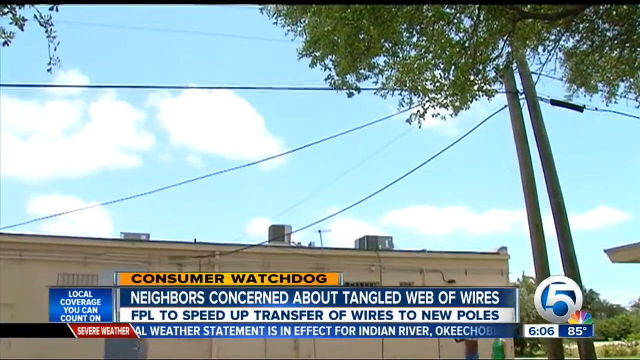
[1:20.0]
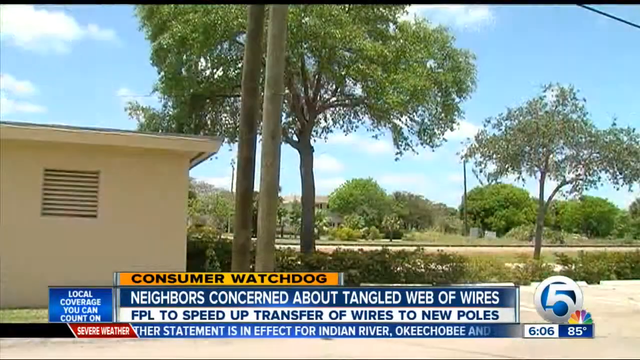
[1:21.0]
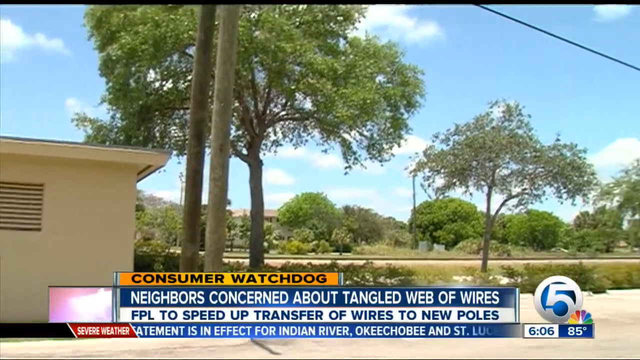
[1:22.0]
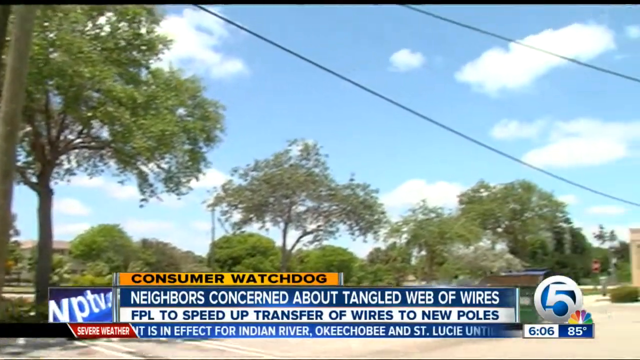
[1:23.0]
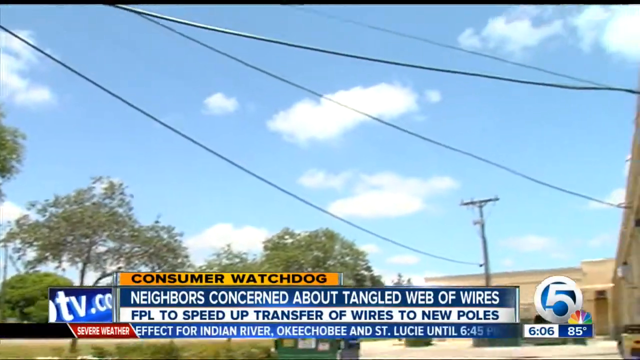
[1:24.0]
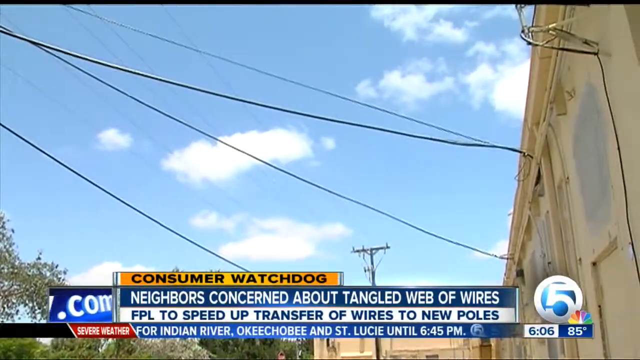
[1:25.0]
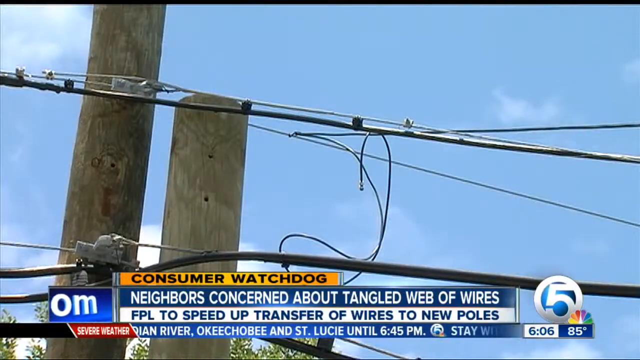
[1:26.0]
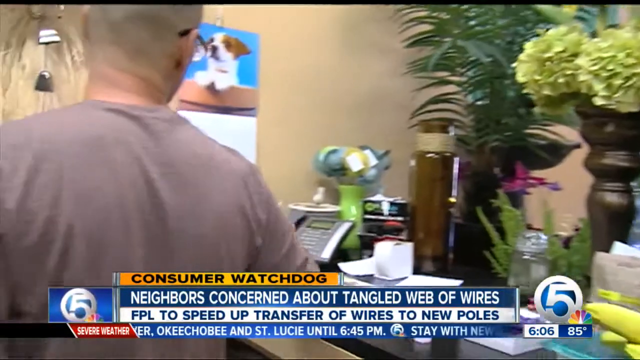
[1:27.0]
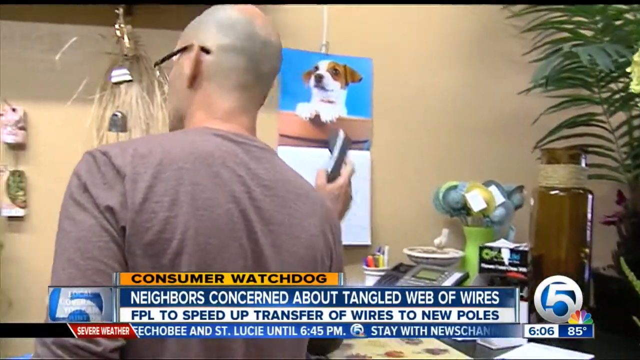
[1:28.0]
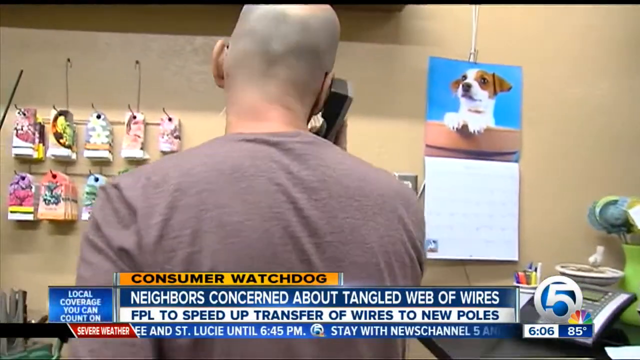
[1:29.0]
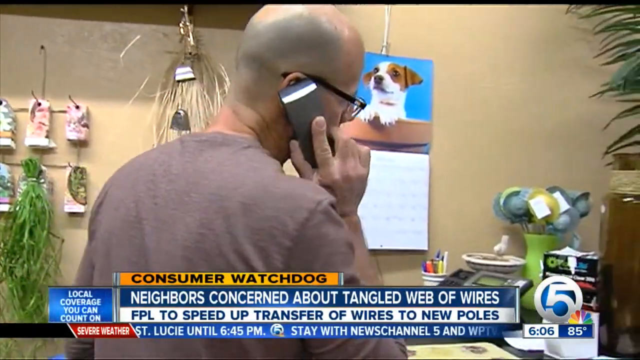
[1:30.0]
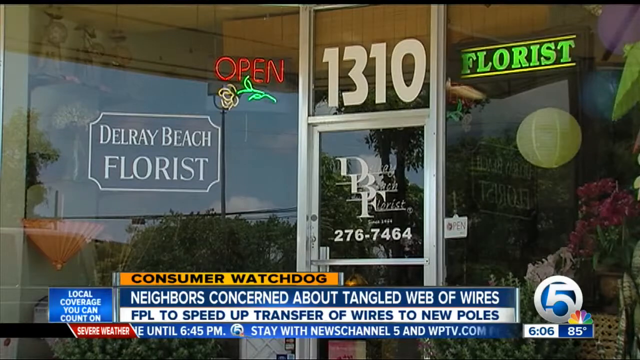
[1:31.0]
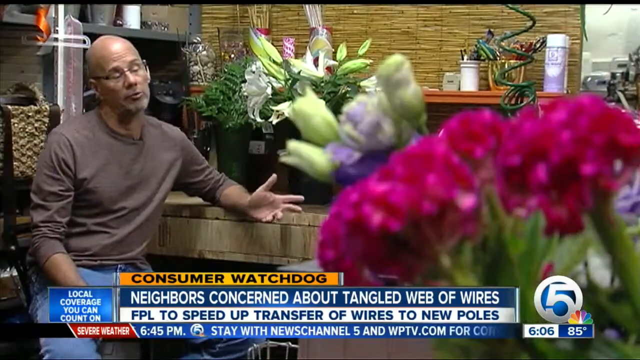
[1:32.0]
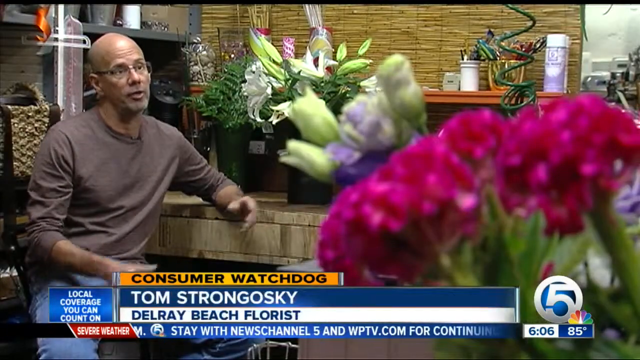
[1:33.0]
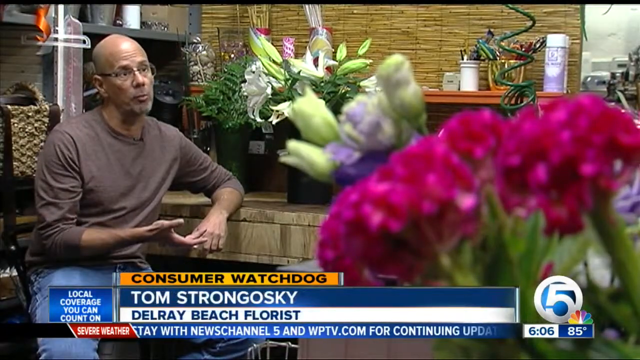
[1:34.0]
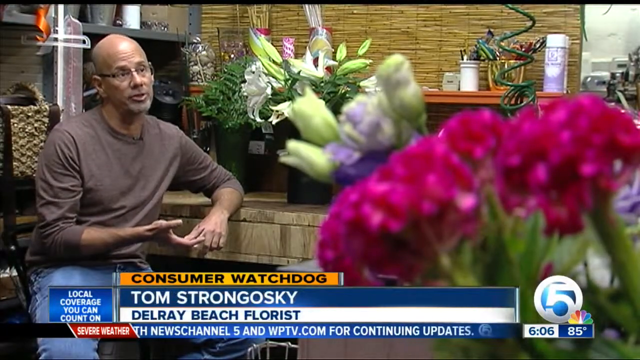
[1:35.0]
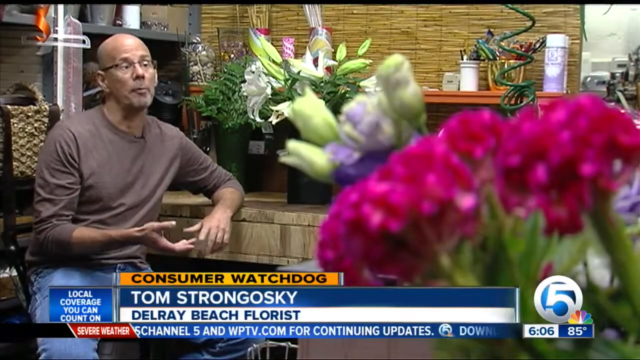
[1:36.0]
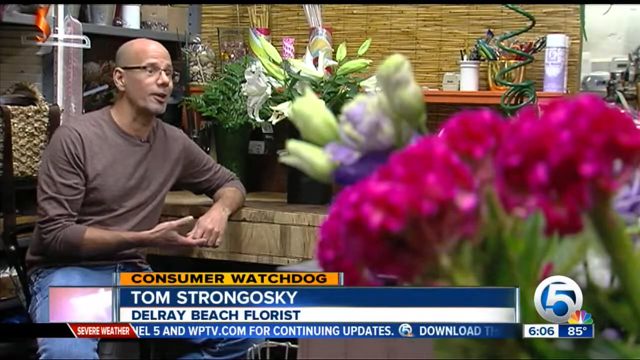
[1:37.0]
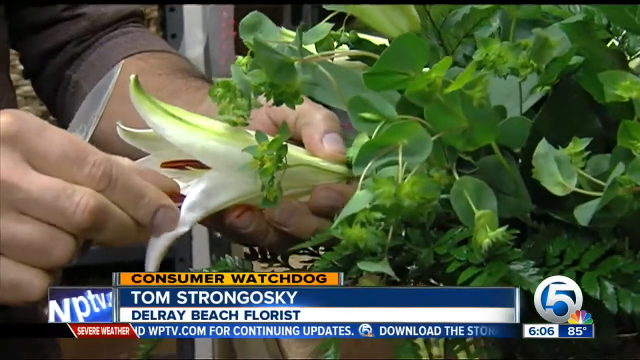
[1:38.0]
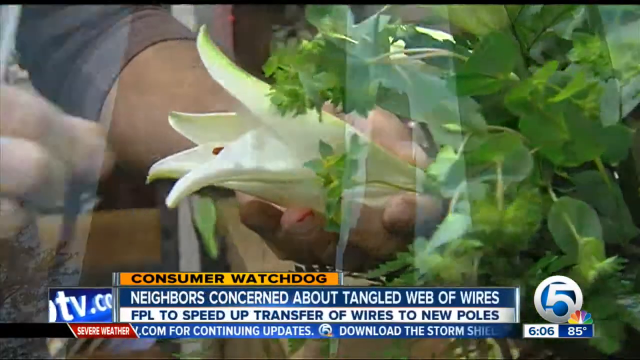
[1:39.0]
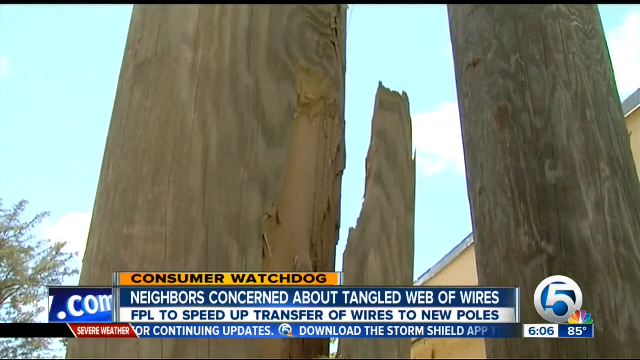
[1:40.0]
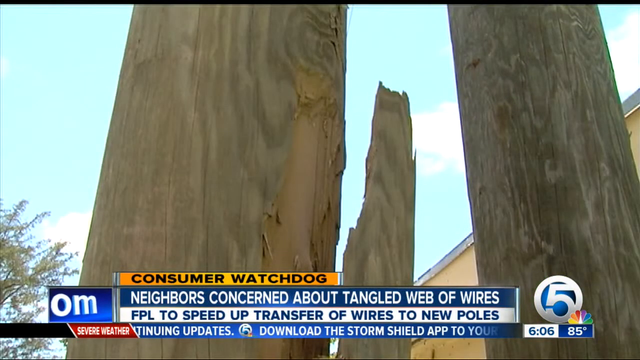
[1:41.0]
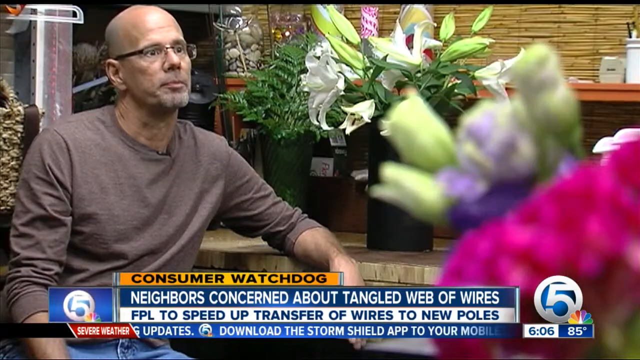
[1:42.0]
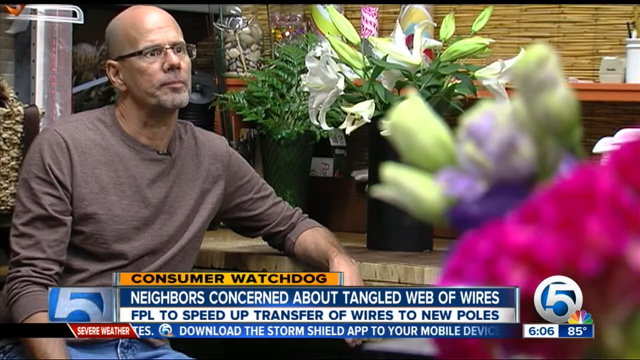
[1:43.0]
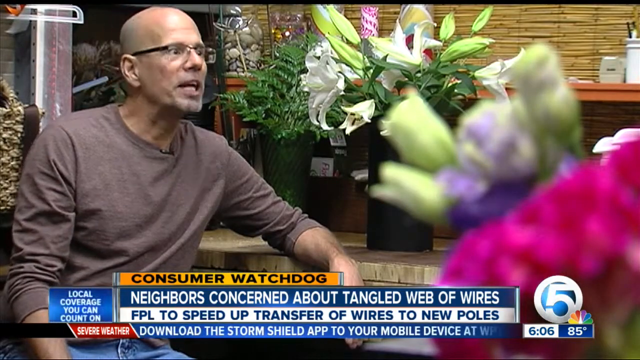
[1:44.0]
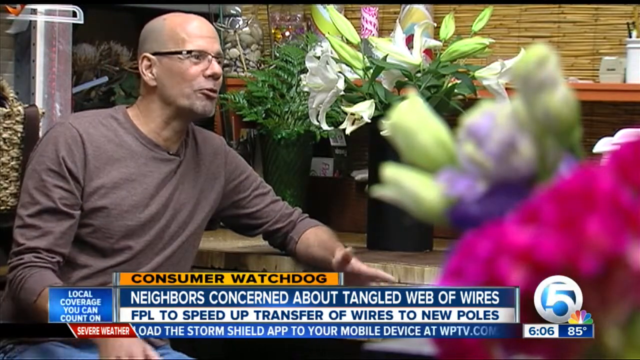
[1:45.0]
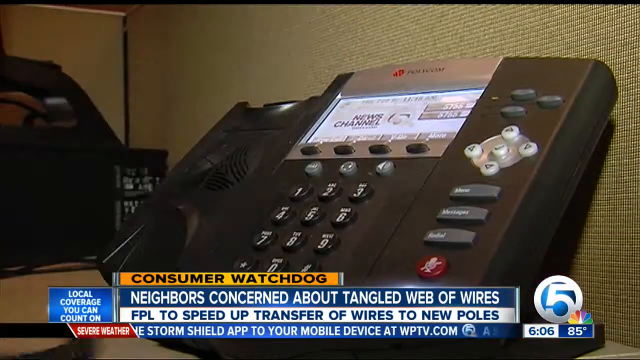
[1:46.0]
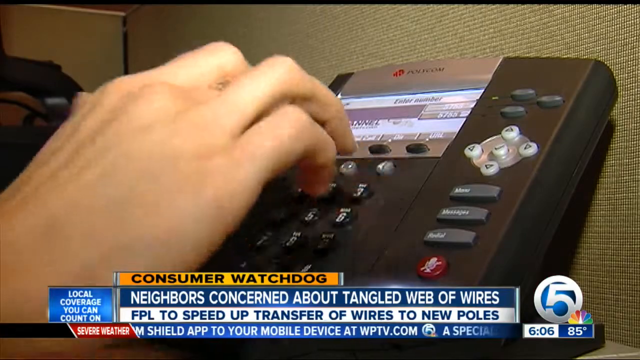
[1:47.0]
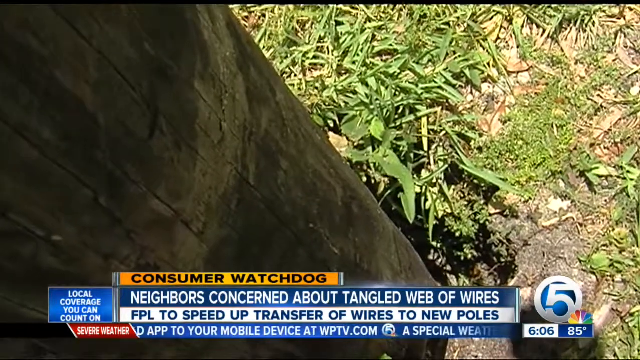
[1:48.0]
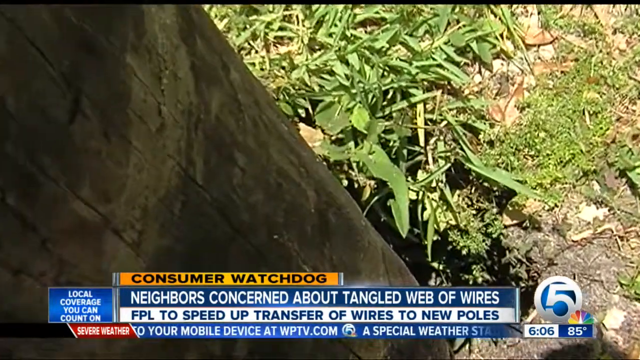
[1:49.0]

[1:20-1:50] The telephone wires are shown from different angles, with the camera panning left to right, followed by another zoomed-in look at the same wires. Indoors, a bald man with dark glasses and a t-shirt has his back to the camera; he appears to have picked up a telephone and holds it to his right ear, looking left and then turning slightly toward his right. The view moves to the front of a business that looks to be a florist, with the address 1310 on the front and an open sign to its left. Inside the florist, the same man who picked up the phone now sits facing the camera, with flowers to his right on the left-hand side of the screen. He speaks to someone toward the right, touching his hands as he speaks. The view goes outside to a close-up of telephone poles that look slightly broken, then back into the store, where someone's hand enters numbers on the telephone.